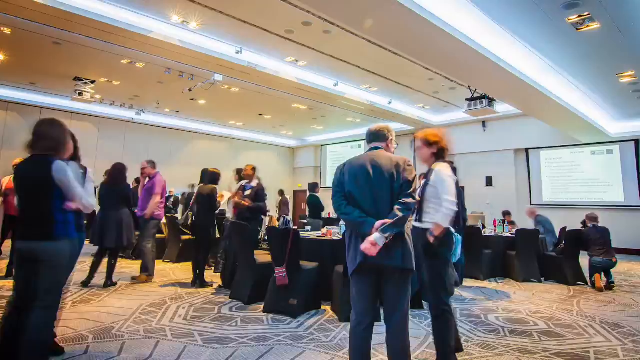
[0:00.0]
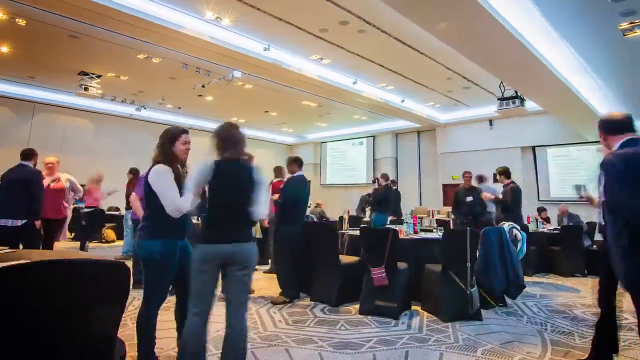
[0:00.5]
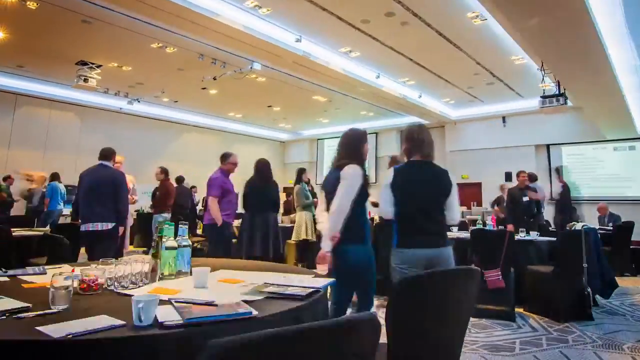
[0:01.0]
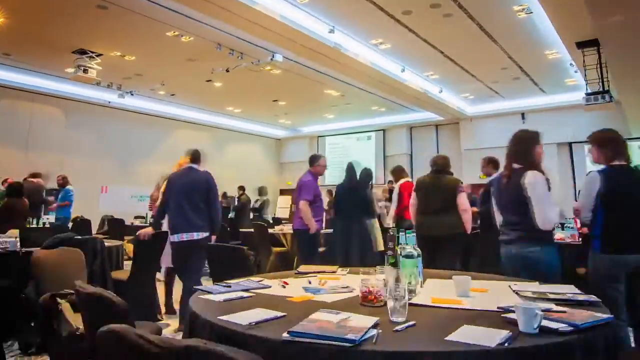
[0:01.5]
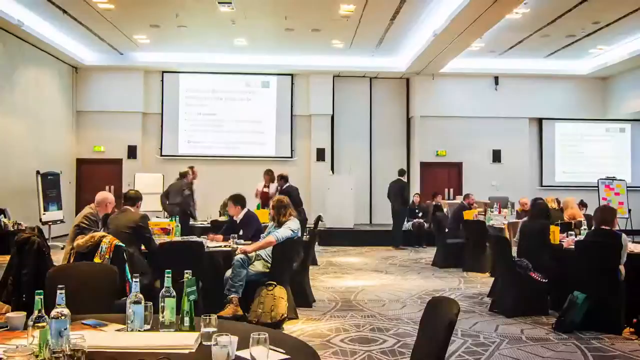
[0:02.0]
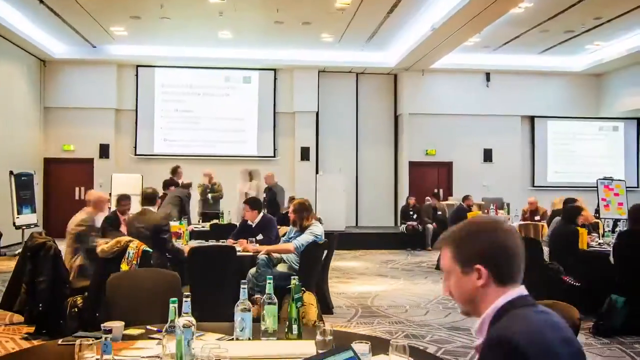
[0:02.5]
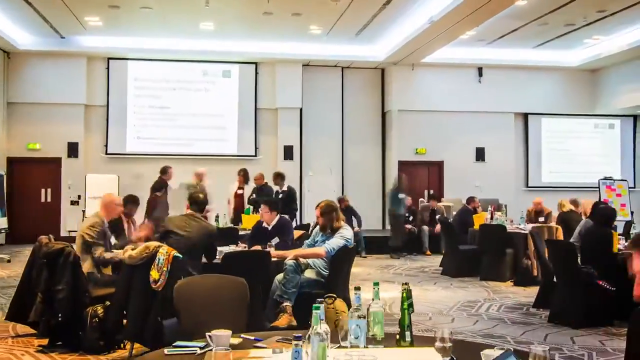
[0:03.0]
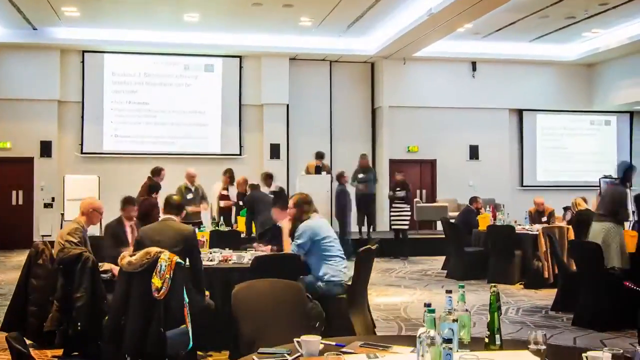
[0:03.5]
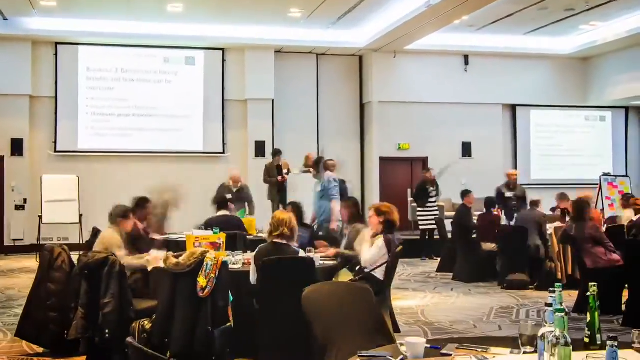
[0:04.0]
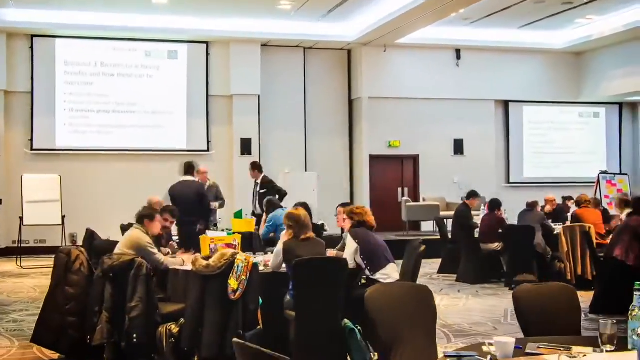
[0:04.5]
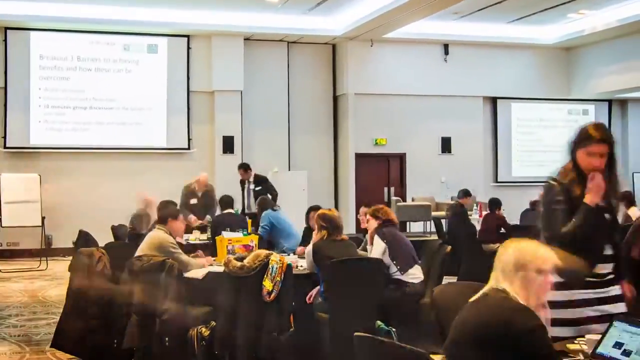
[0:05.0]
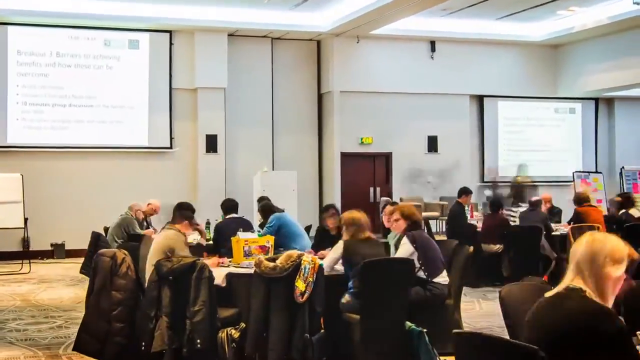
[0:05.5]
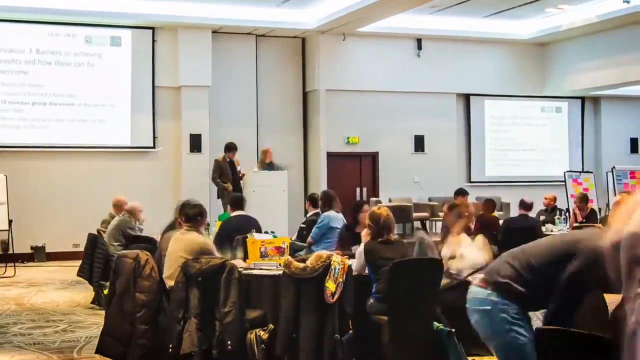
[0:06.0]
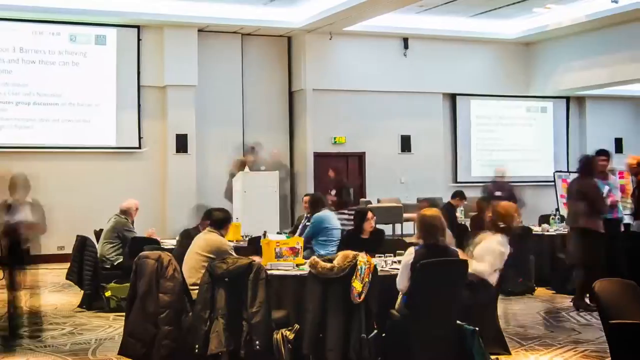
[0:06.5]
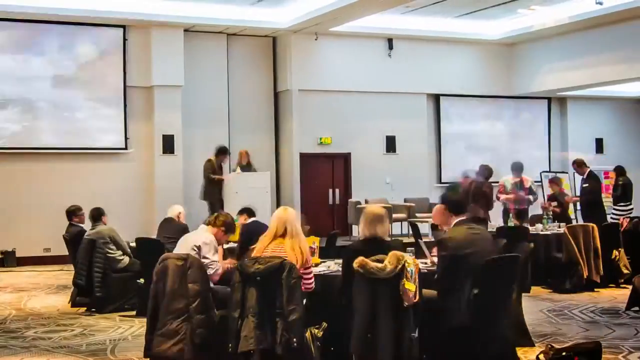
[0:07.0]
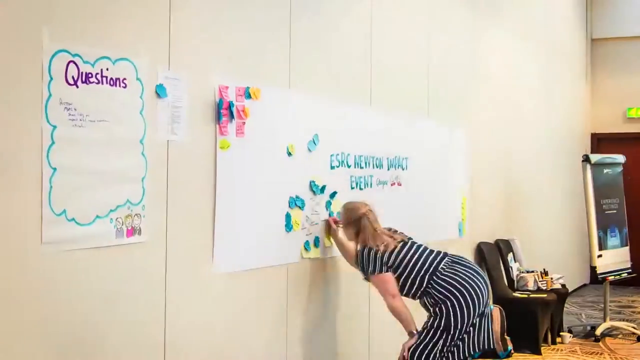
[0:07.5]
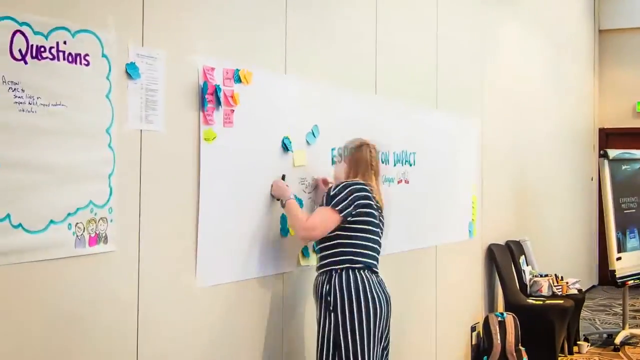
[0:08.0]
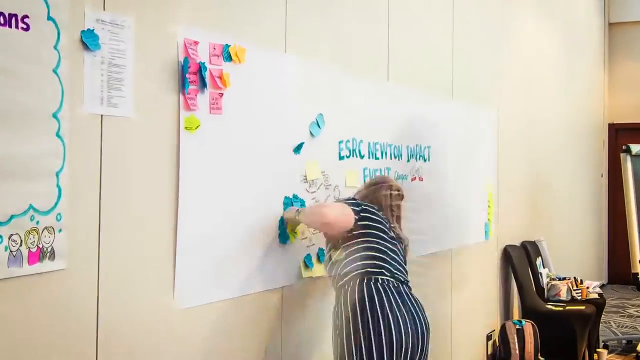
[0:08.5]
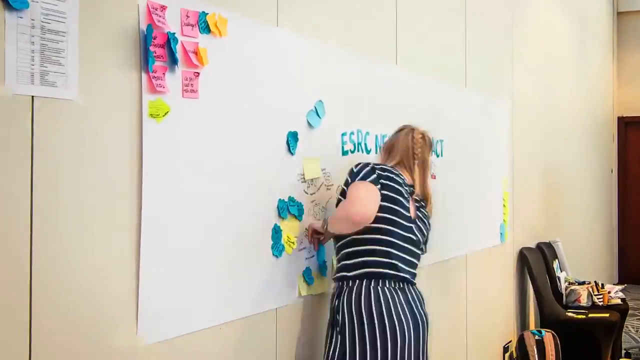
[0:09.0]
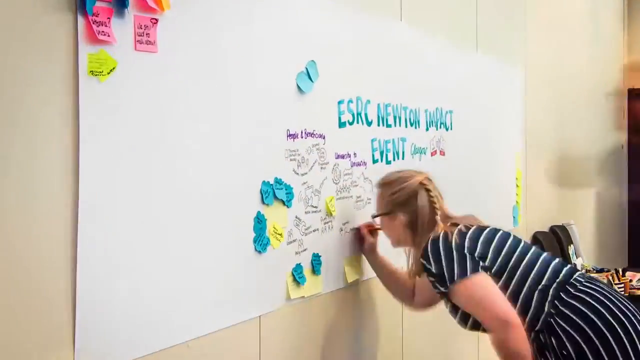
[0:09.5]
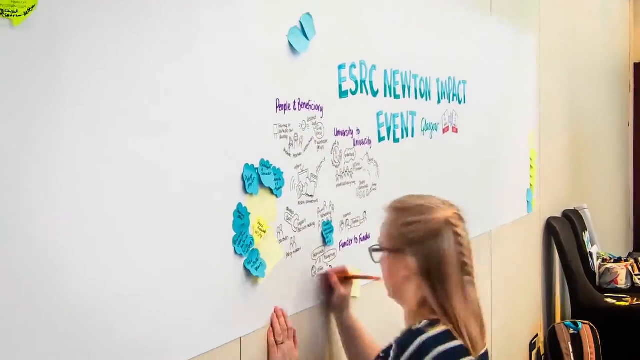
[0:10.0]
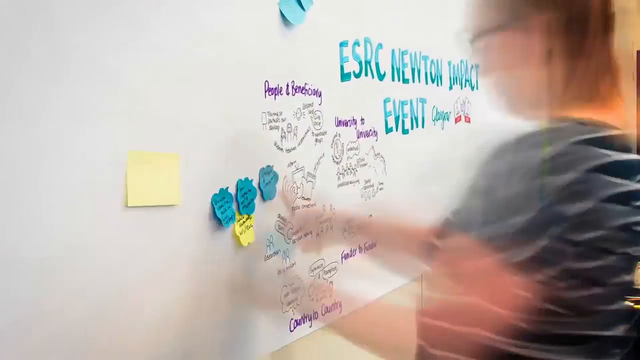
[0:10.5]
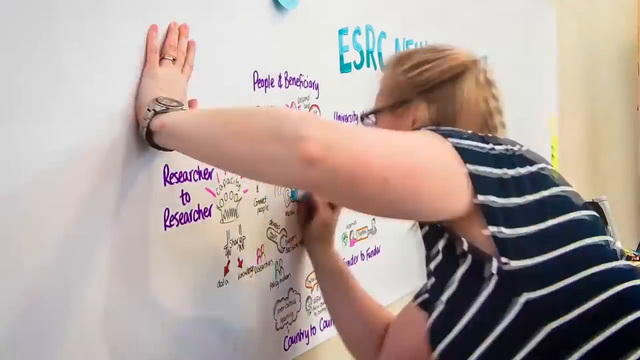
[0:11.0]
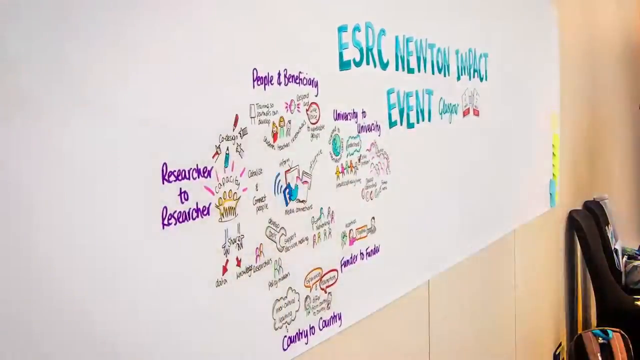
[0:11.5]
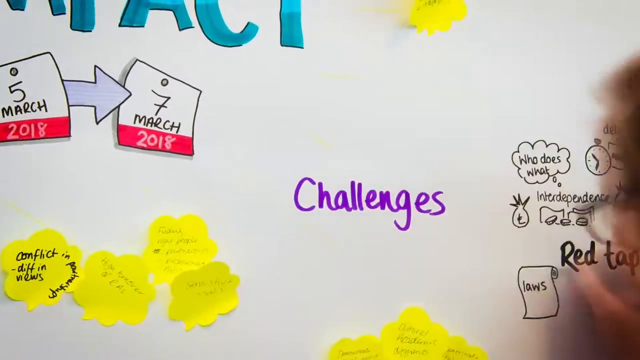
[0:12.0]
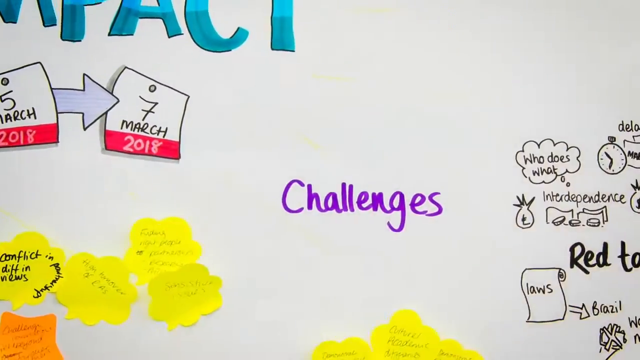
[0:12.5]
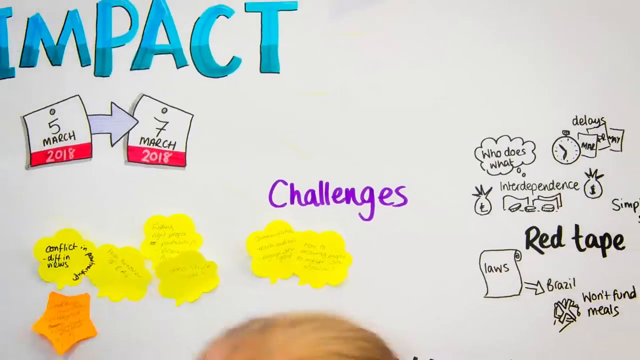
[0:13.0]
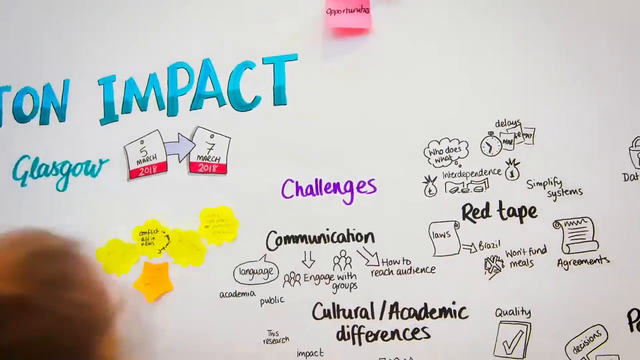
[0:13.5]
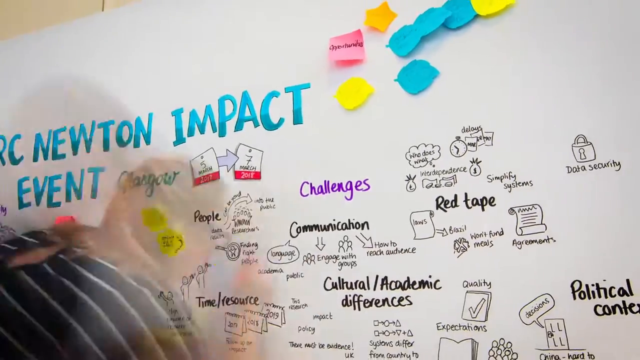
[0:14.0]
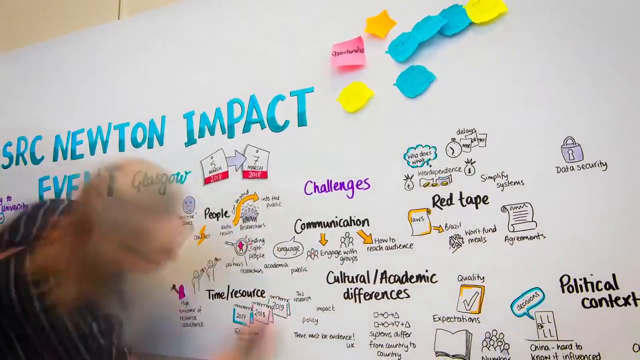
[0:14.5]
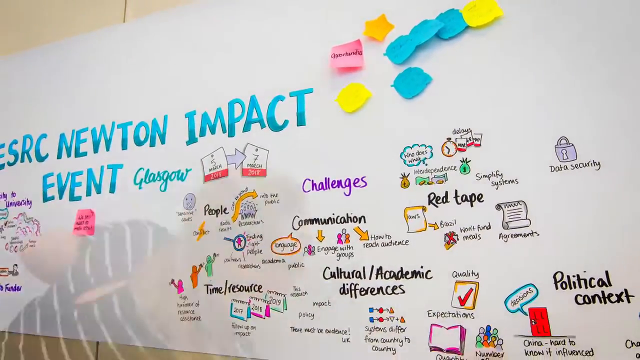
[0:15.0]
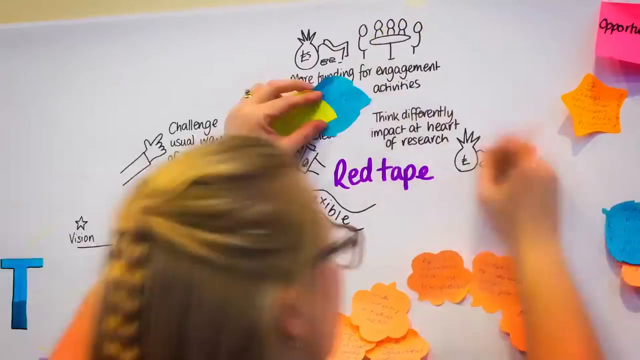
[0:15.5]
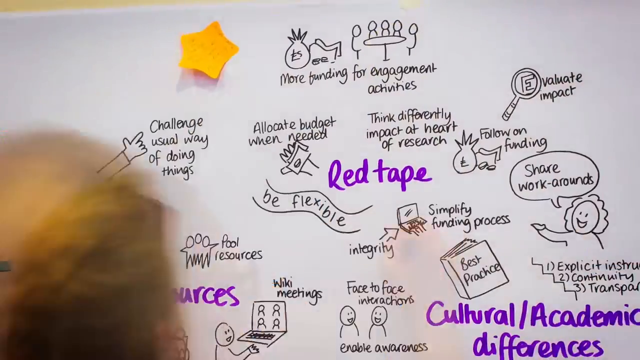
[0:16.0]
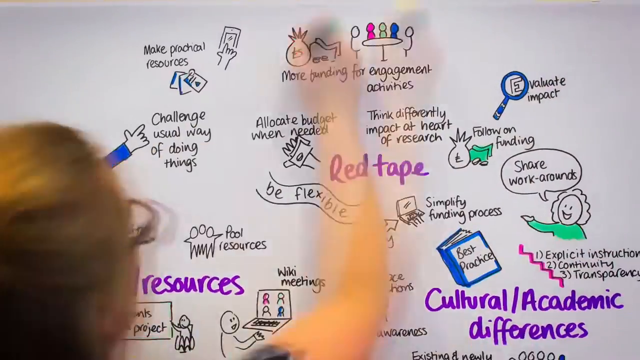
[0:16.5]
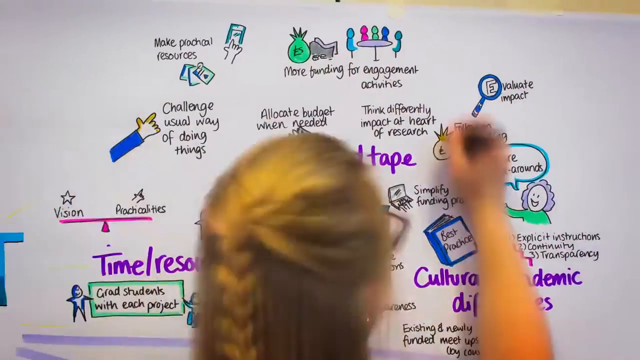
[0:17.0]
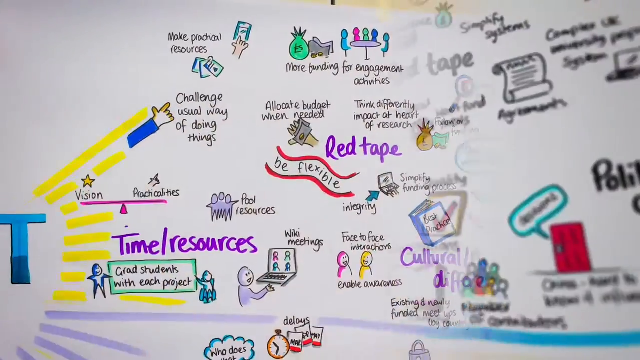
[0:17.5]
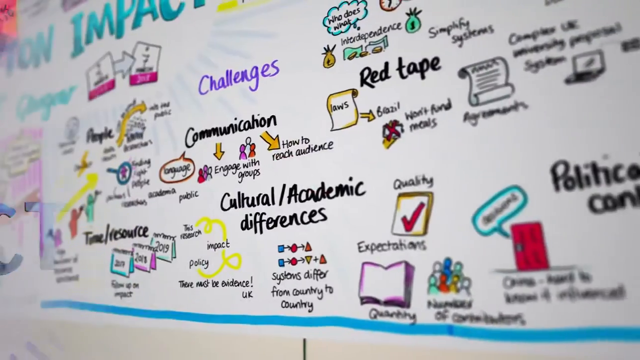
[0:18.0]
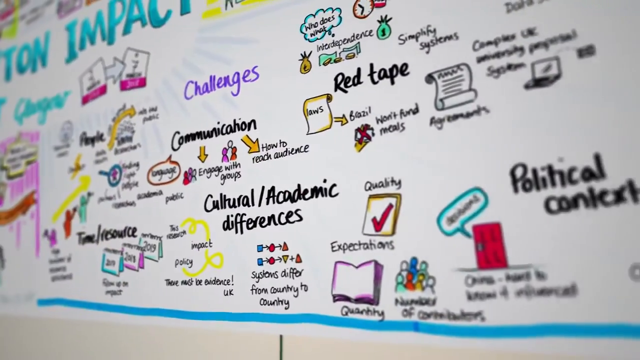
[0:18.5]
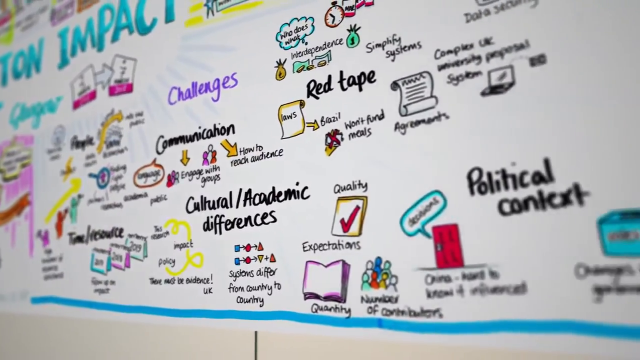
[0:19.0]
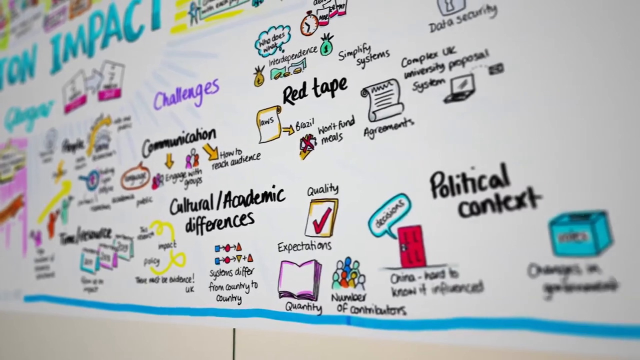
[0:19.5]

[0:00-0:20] A time-lapse moves around some sort of gathering or function. A woman writes on a whiteboard that reads "ESRC Newton Impact Event." She writes a lot of information on the board and puts sticky notes beside it. Two little calendars are on the board, one reading "March the 5th, 2018" and the other "March the 7th, 2018," probably the time frame in which the event takes place. The word "challenges" is in the middle of the screen and is highlighted in a way. The woman continues to fill out the whiteboard with colorful text and small colorful doodles. She is the main character: she stands at the whiteboard, has blonde hair, wears glasses, and has on a black dress with white stripes. Most of the people in the room wear dressy or dressy-casual clothing. The room is well-lit and has quite a cozy atmosphere.